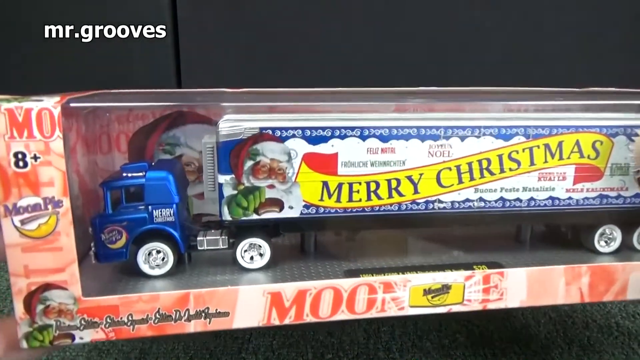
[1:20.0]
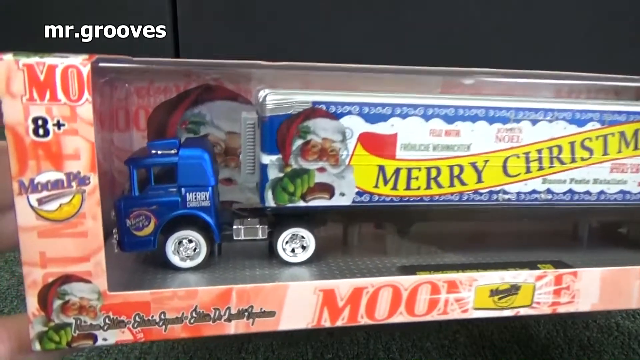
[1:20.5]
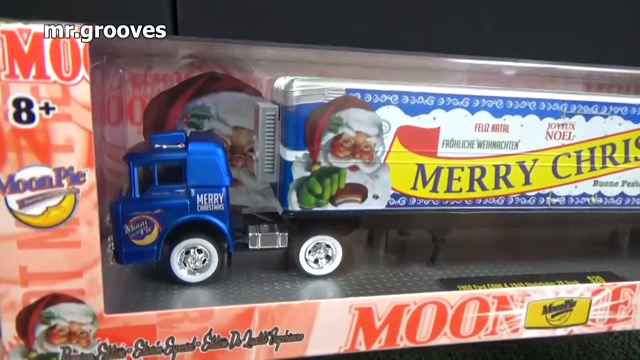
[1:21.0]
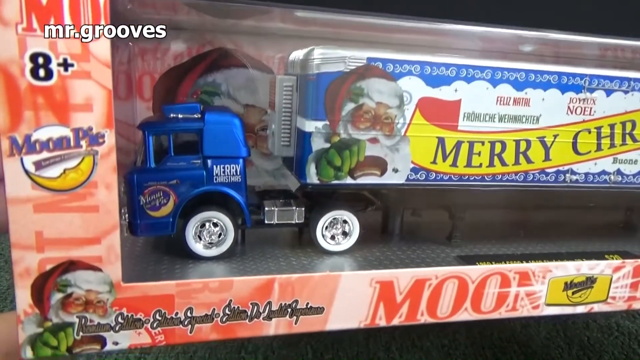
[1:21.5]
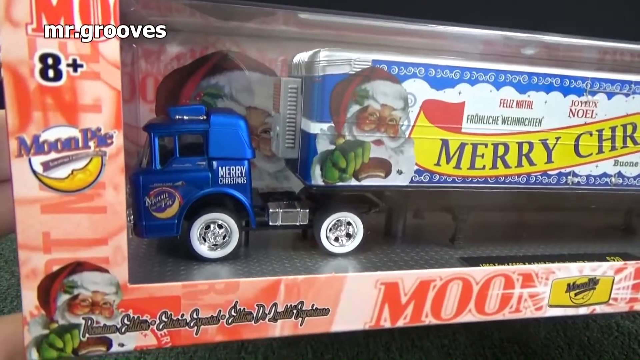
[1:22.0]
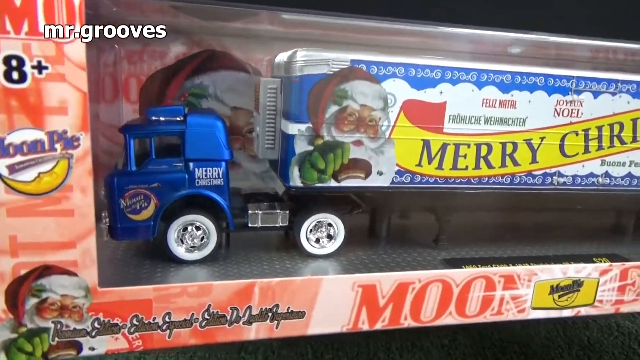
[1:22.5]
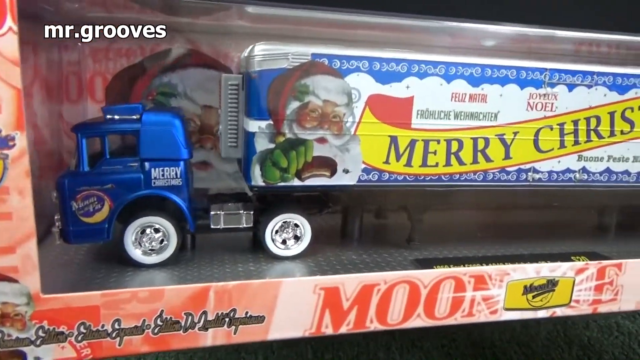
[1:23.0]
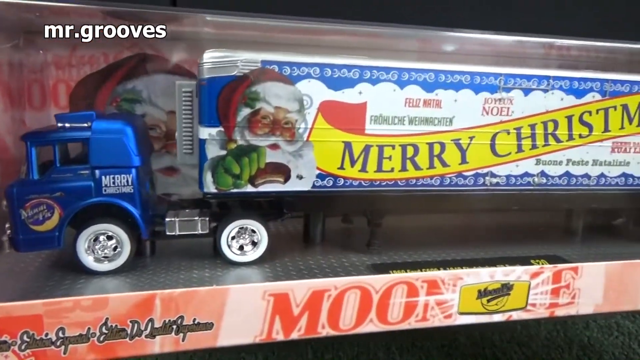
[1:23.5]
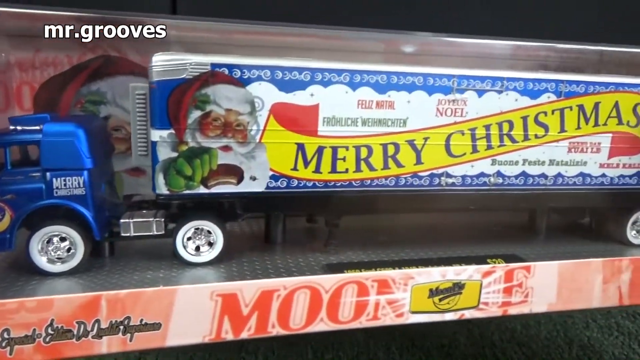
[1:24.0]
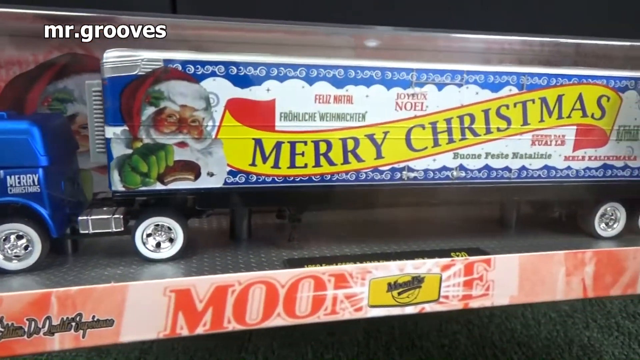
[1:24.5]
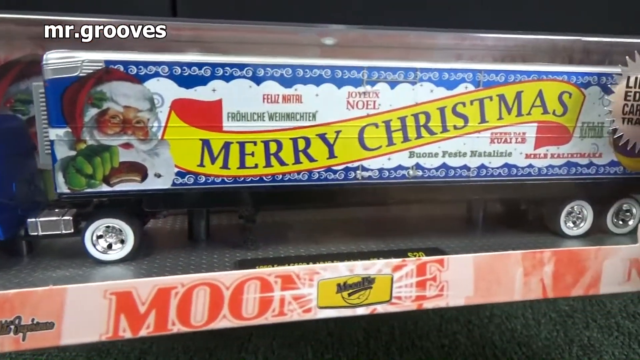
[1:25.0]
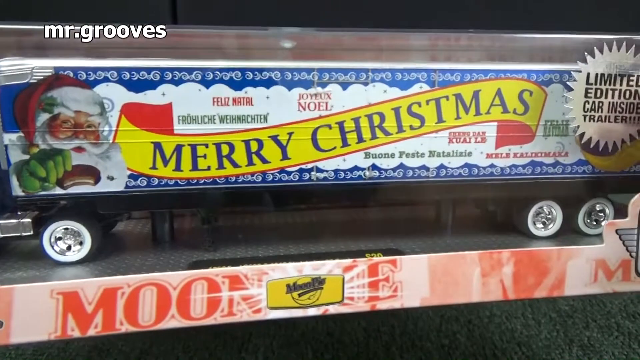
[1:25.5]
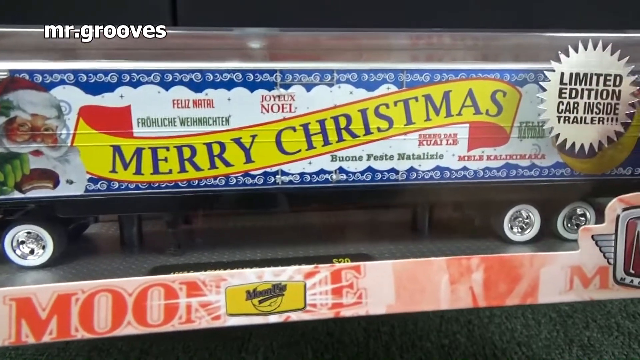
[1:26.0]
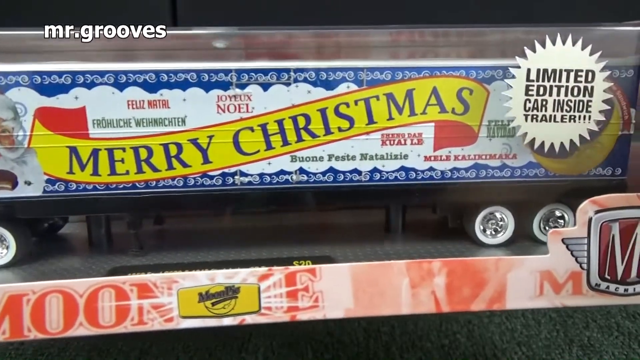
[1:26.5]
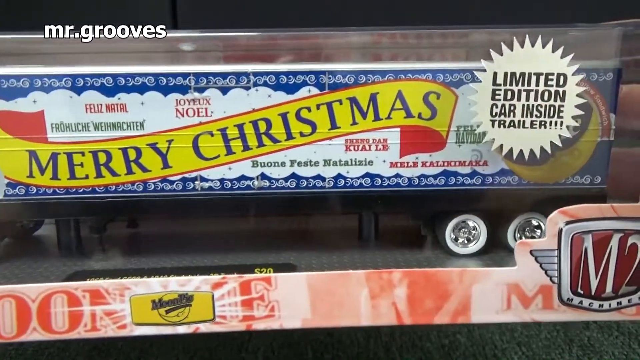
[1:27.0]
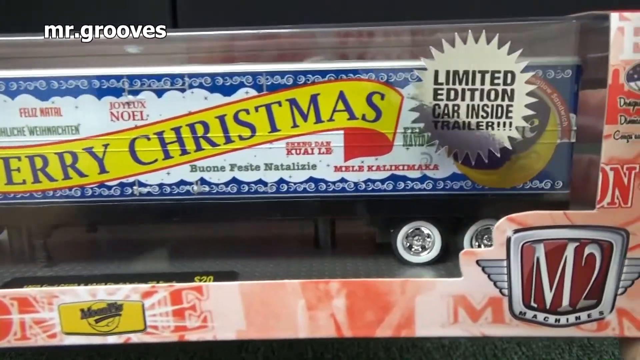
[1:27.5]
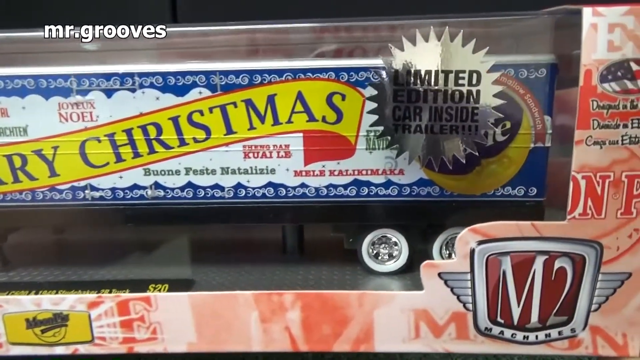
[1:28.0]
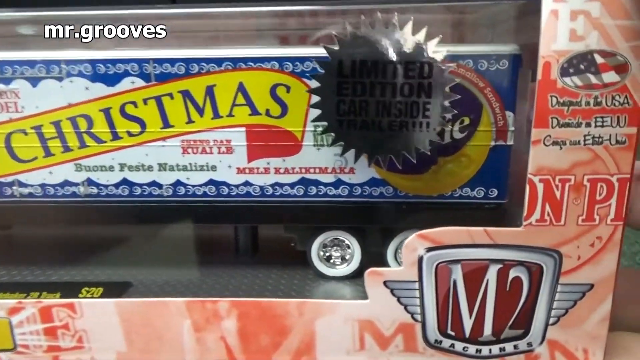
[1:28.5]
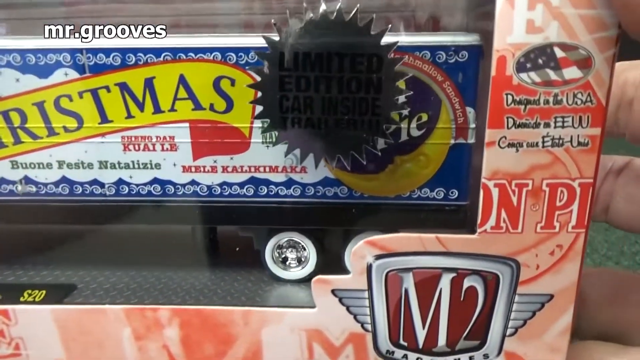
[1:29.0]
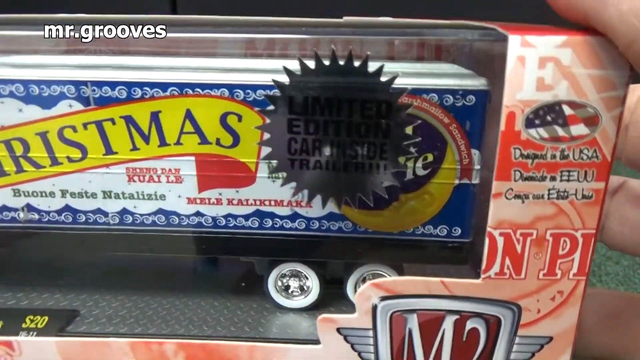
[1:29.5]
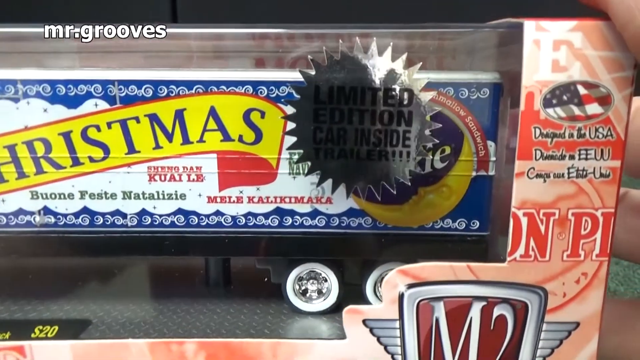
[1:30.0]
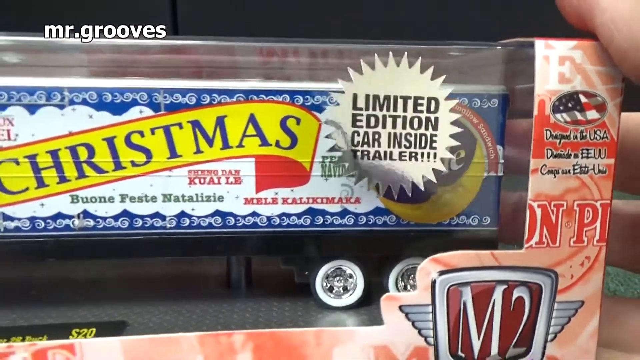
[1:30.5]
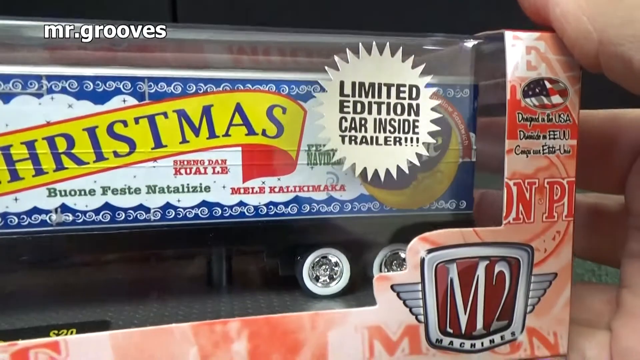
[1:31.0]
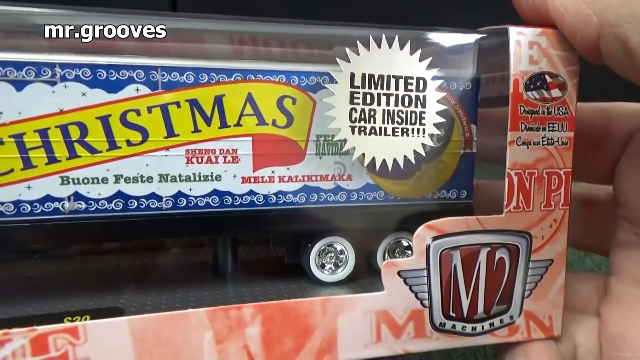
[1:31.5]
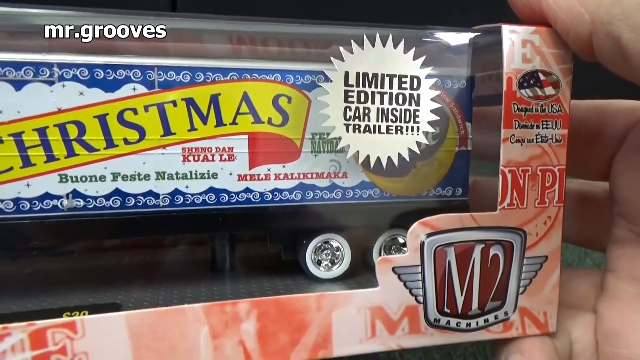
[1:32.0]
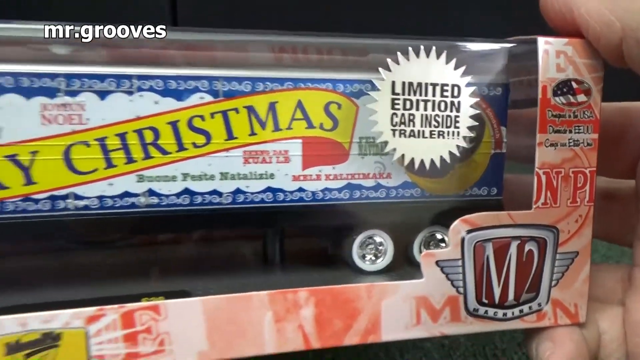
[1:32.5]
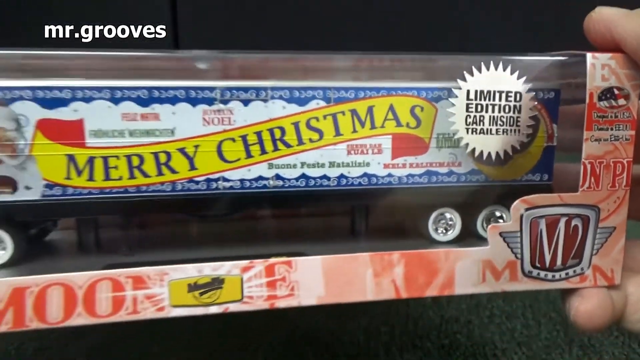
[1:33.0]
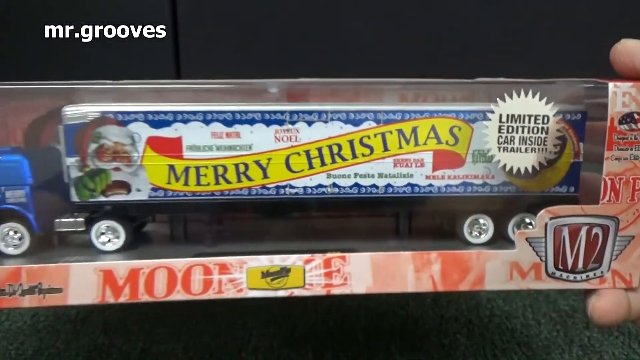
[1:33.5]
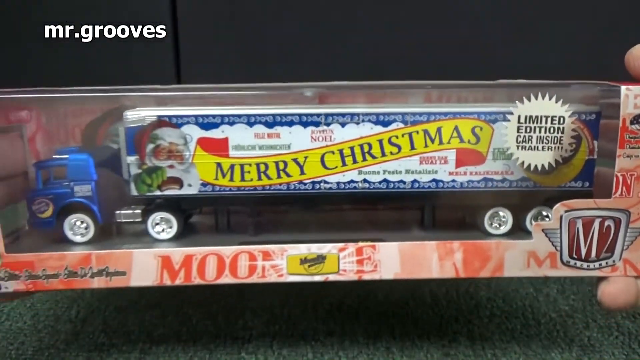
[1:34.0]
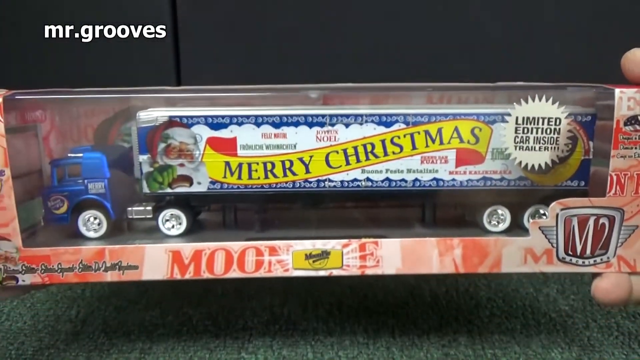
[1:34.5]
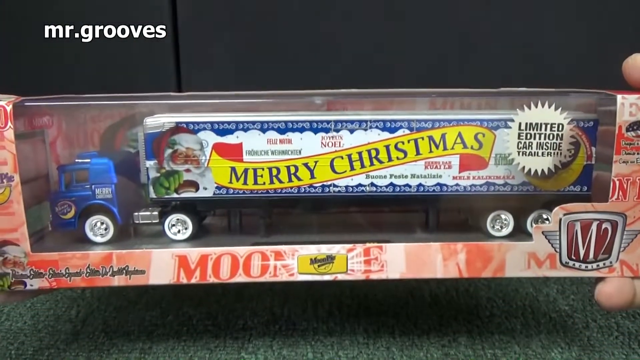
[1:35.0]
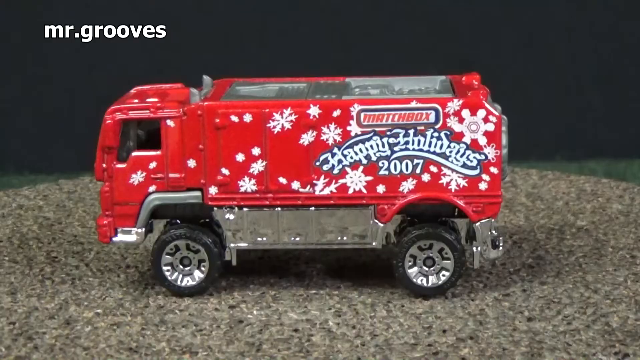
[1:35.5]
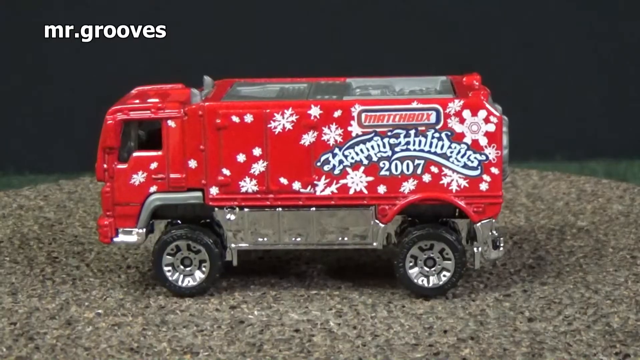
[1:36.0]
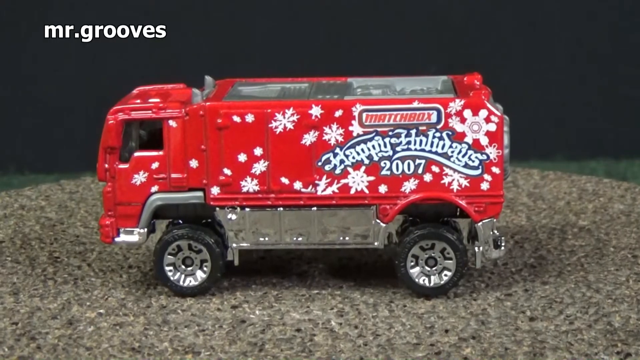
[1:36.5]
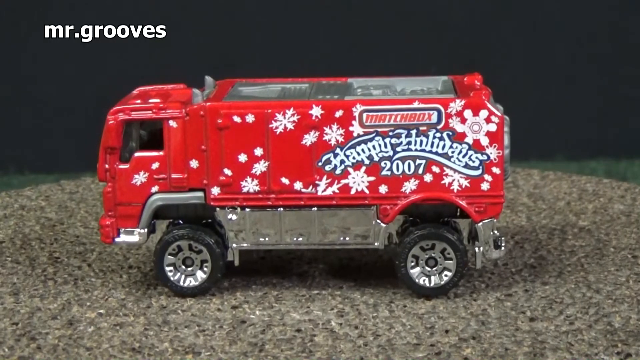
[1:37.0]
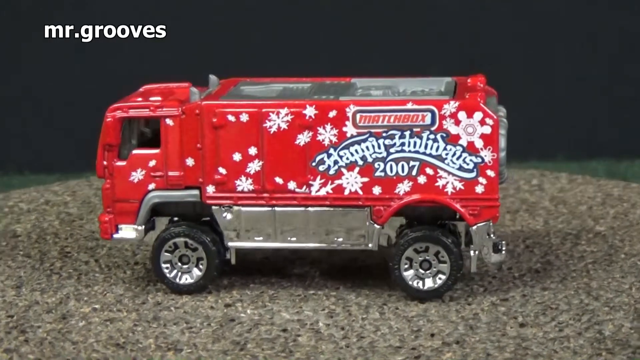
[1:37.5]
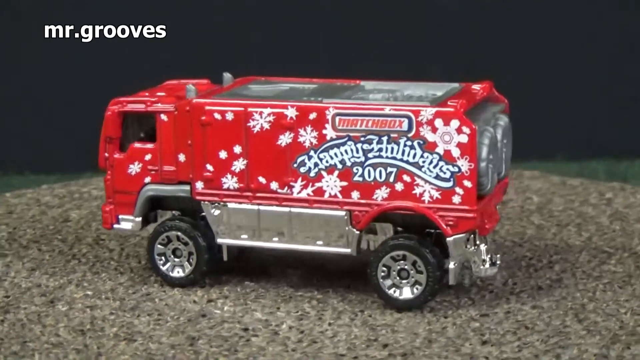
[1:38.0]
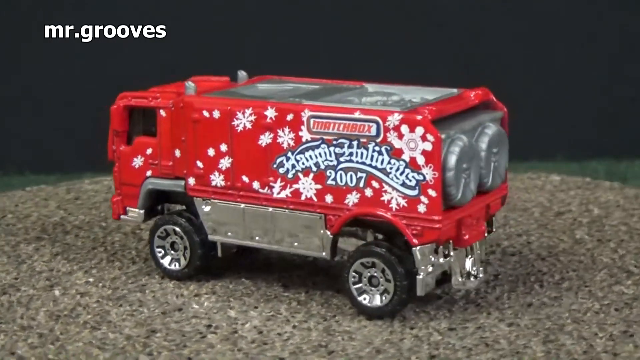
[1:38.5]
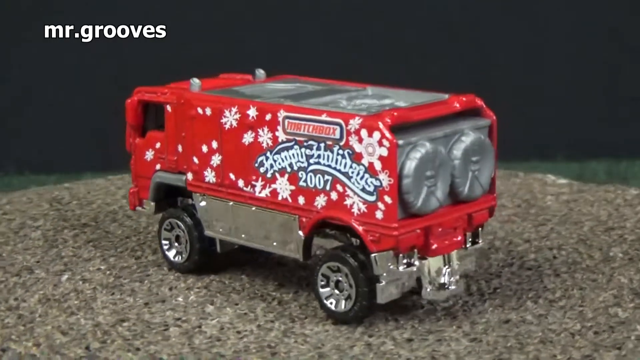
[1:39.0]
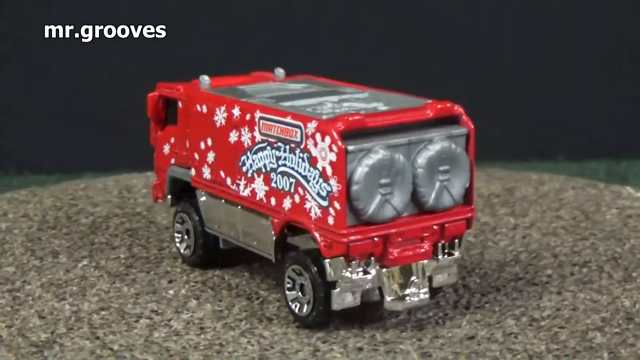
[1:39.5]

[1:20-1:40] Another car in its packaging is shown. The packaging has a clear plastic window showing a blue toy truck inside. The truck has a trailer showing Santa Claus with green hands, and the trailer has a yellow diagonal banner that says "Merry Christmas." "Limited Edition" is written on the packaging in black on a silver sticker. The packaging looks like it is from a company called Moon, and it has "M2" on the right. Hands show the packaging to the camera, moving it side to side to show every detail of the truck. The truck is for children aged 8 and older.